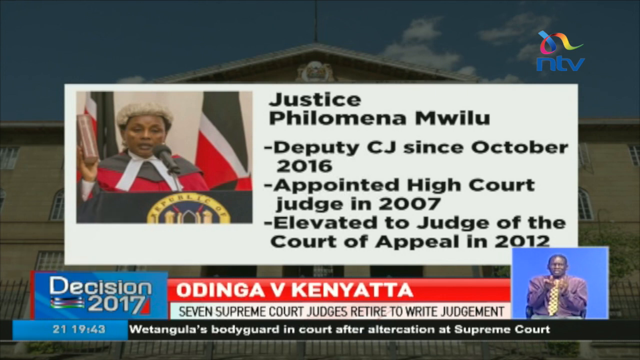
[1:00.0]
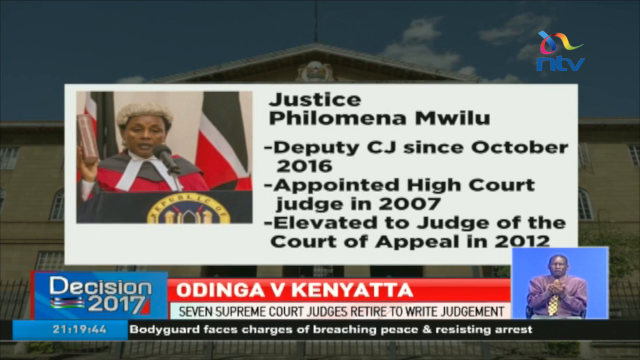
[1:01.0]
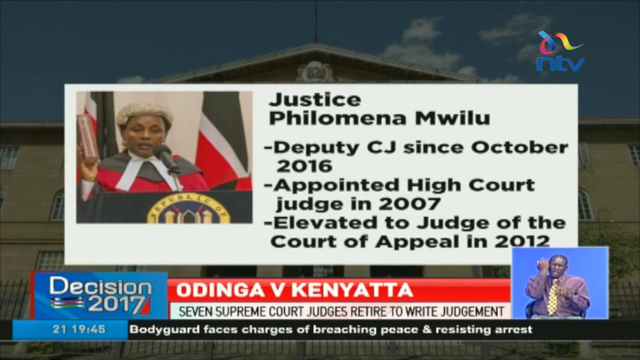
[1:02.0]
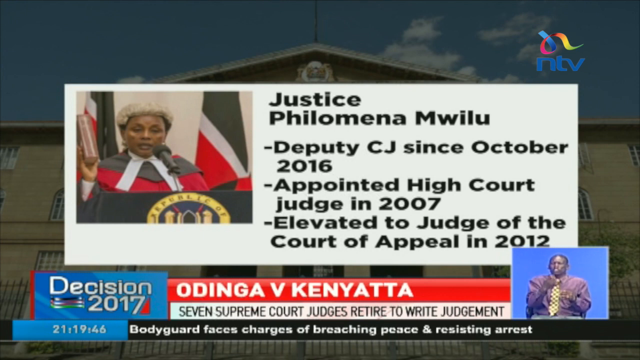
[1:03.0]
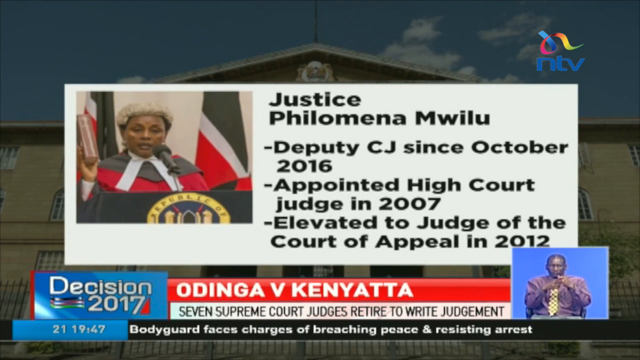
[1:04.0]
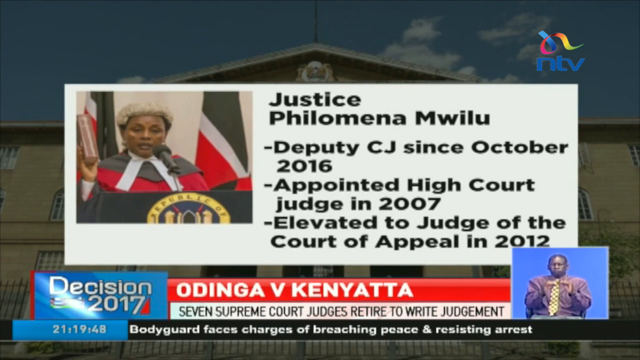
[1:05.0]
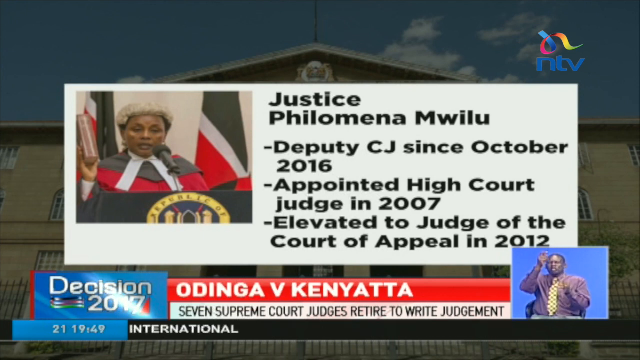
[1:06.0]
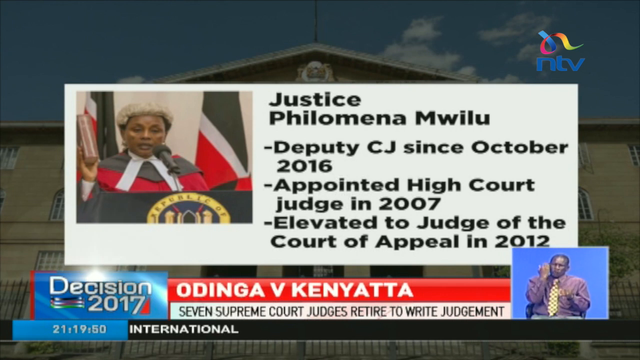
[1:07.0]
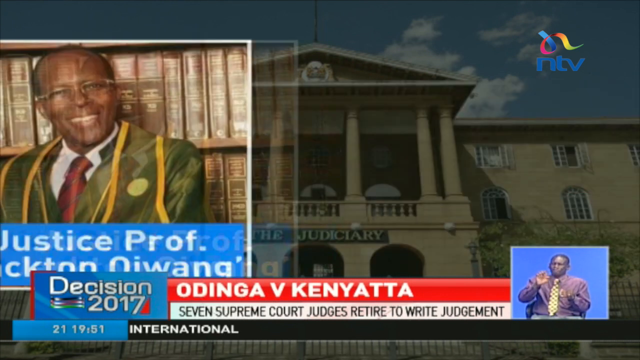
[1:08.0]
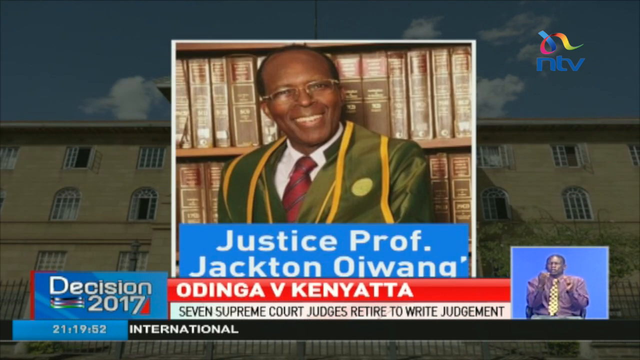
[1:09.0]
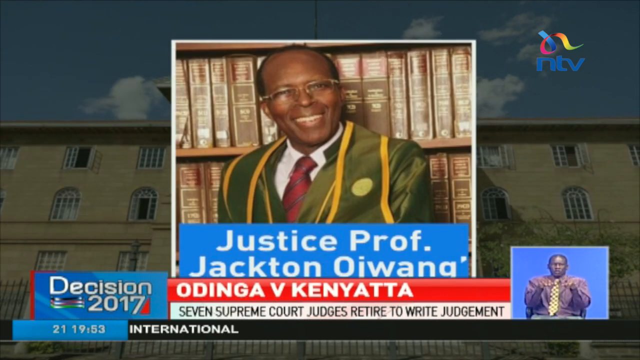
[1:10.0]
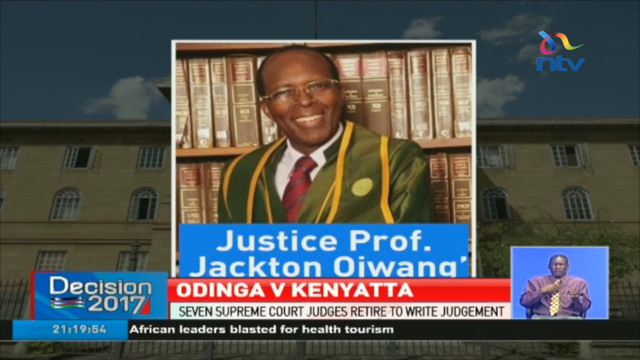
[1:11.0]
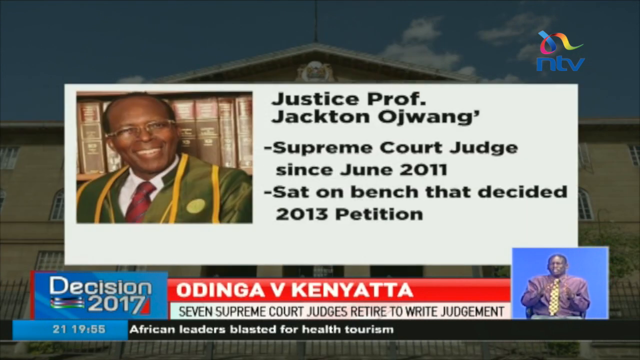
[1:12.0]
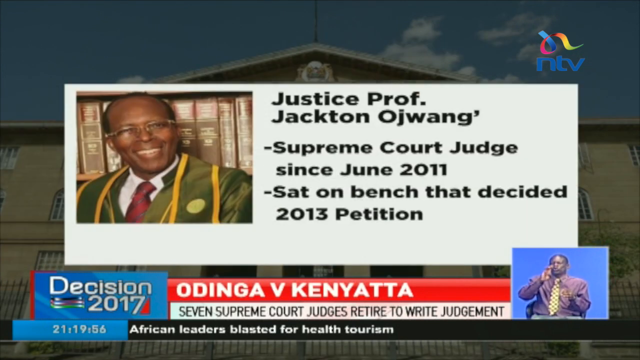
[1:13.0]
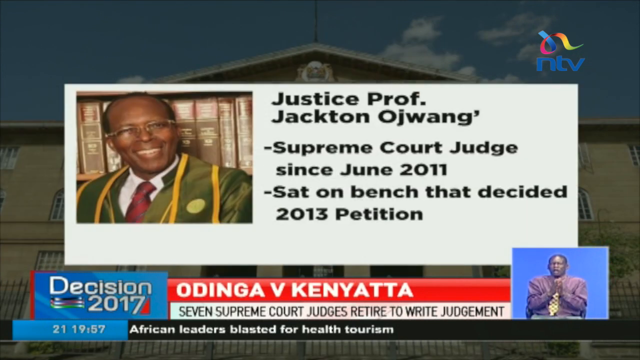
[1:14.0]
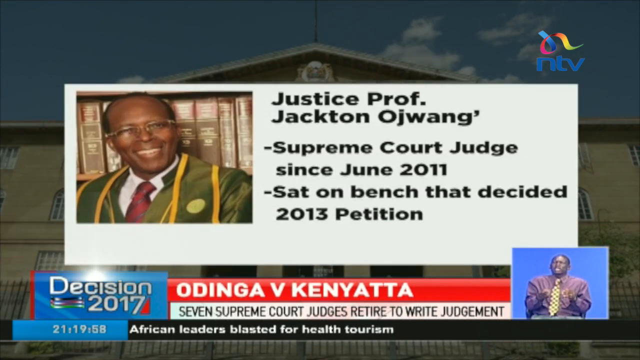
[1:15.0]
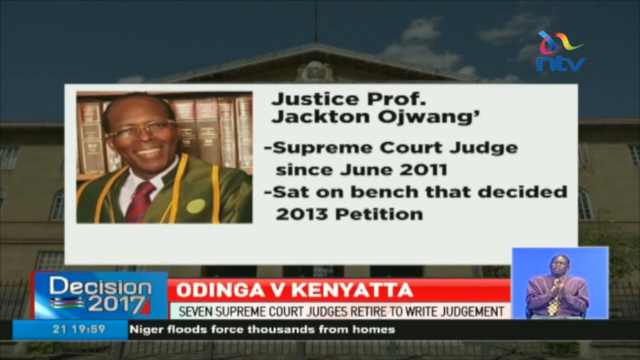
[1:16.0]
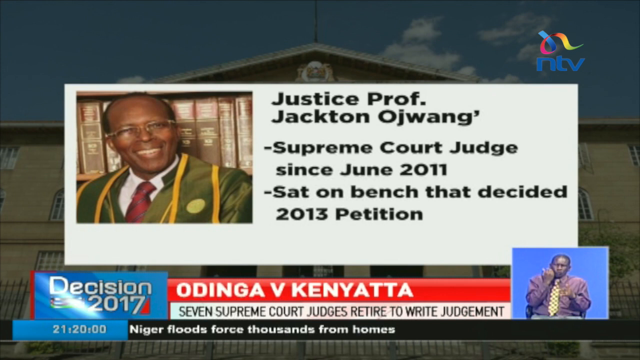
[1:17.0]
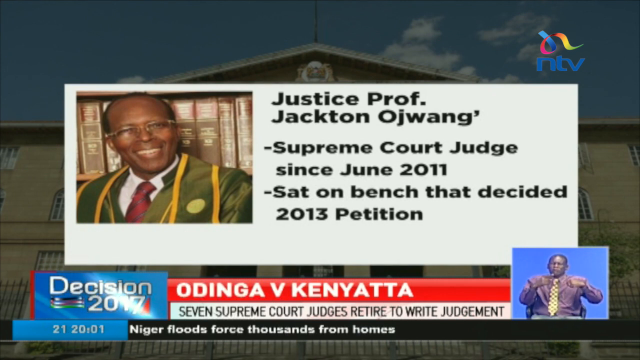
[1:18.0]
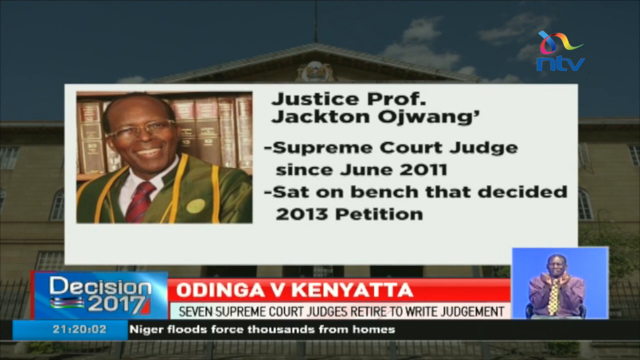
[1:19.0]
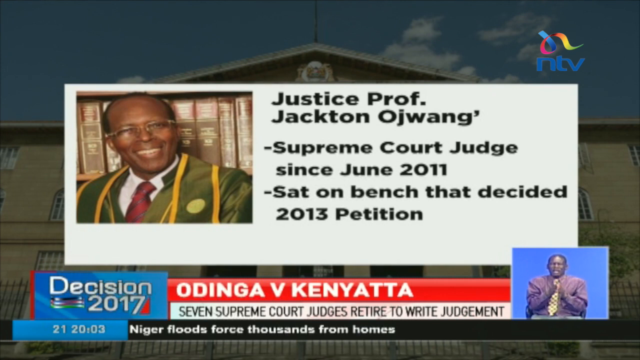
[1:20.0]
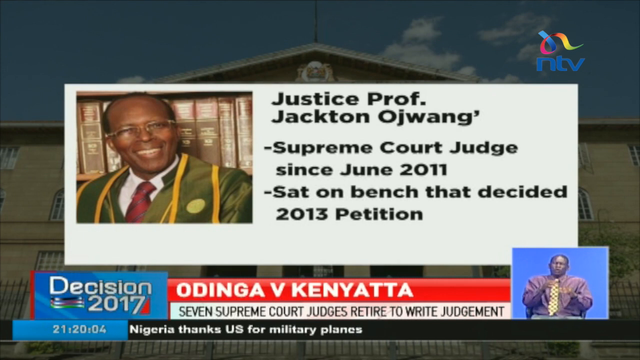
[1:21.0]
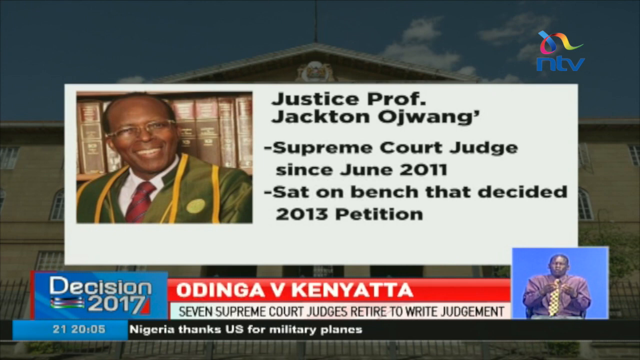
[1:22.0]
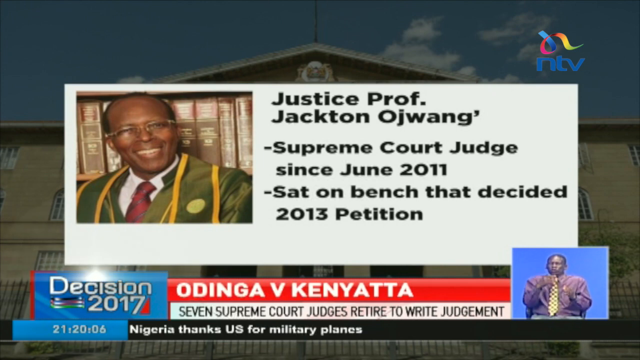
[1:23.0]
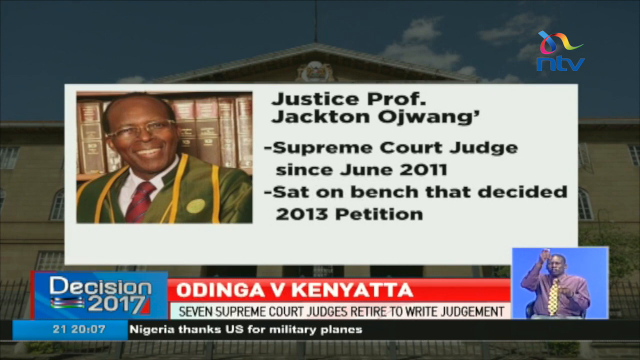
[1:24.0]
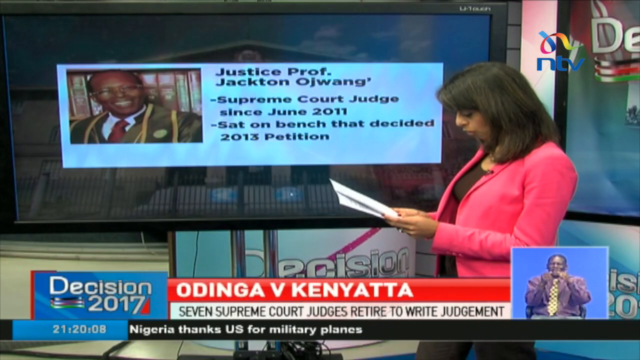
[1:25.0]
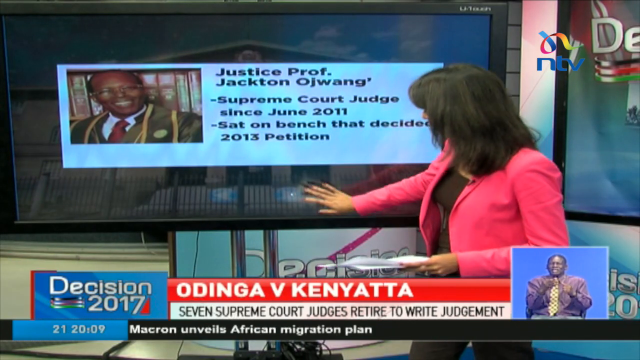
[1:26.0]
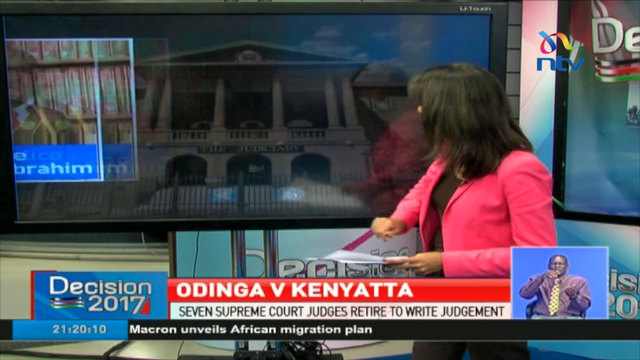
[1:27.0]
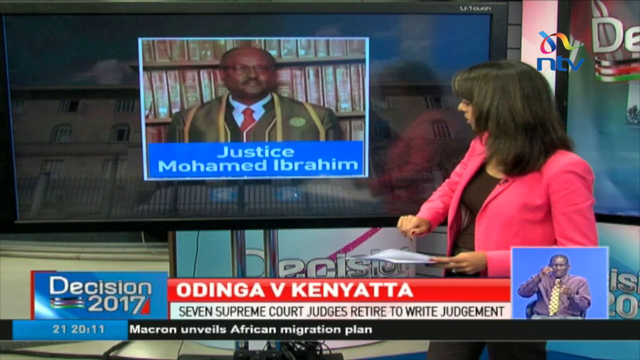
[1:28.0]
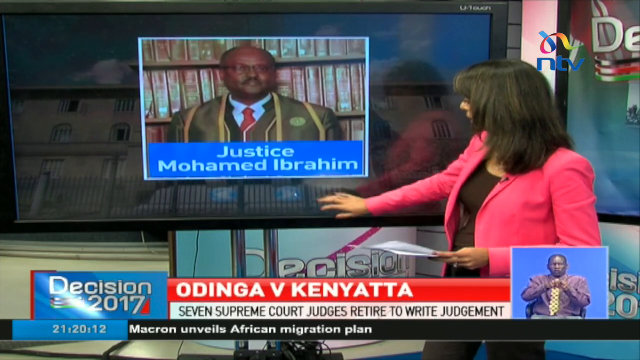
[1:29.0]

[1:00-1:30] A Kenyan news report says "Seven Supreme Court judges retired to write judgments," and apparently a list of the judges flashes on the screen with each one's image, name, and a few facts. A woman judge who looks like an African woman wears a white wig sitting on top of her black hair and a red and white robe, holding up a book in front of a podium as if taking an oath. To the right it says "Justice Philomena Mwilu," with three dashed bullet points: "Deputy C.J. since October 2016," "Appointed high court judge in 2007," and "Elevated to judge of the Court of Appeal in 2012." Next comes a picture of an African man in a greenish black, velvety-looking suit with yellow trim, a red tie, a white button-up shirt, and glasses, sitting in front of a bookcase; it says "Justice Prof. Jackton Ojwang." The same image then appears in a white box with text to the right reading "Justice Prof. Jackton Ojwang" and two bullet points: "Supreme Court judge since June, 2011" and "Sat on bench that decided 2013 petition." The scene changes to the female news reporter standing in front of a large screen showing the image of Justice Prof. Jackton Ojwang. She clicks the forward button on the screen, and another picture appears of a man in a greenish black suit with yellow trim, a red tie, and a button-up shirt, also wearing glasses, with "Justice Mohamed Ibrahim" underneath. The woman clicks the play button on the screen again.